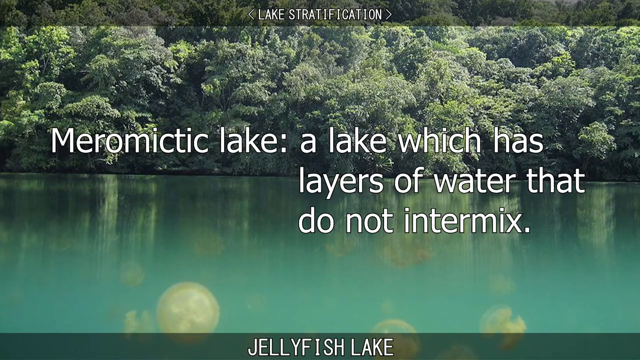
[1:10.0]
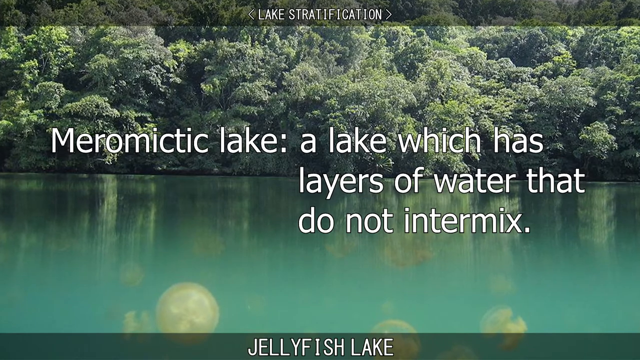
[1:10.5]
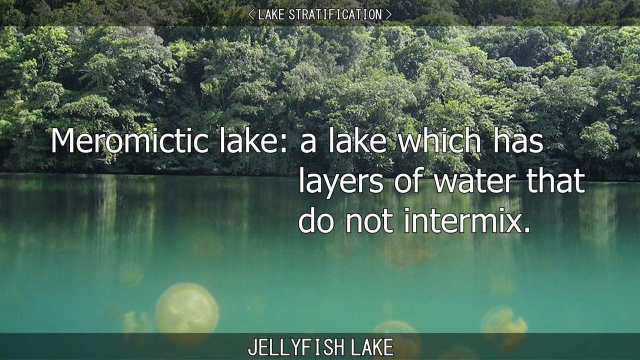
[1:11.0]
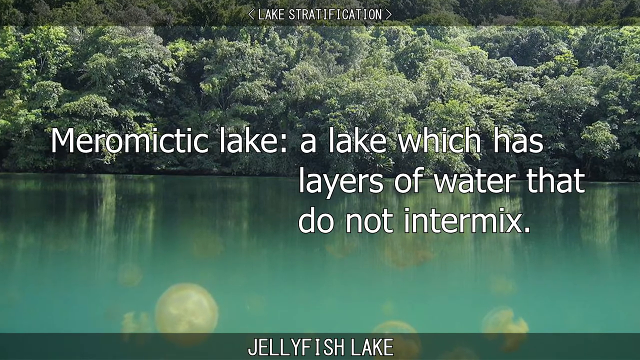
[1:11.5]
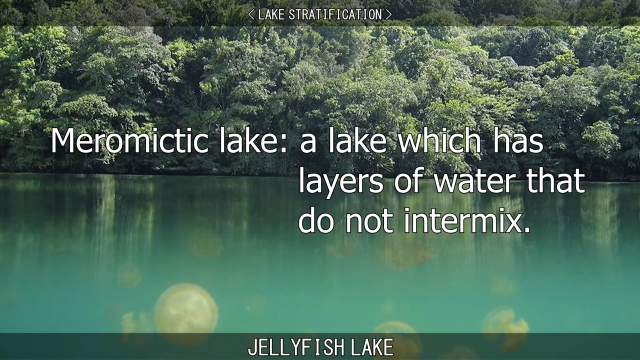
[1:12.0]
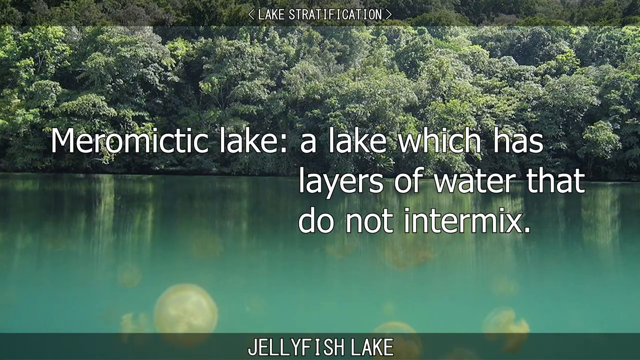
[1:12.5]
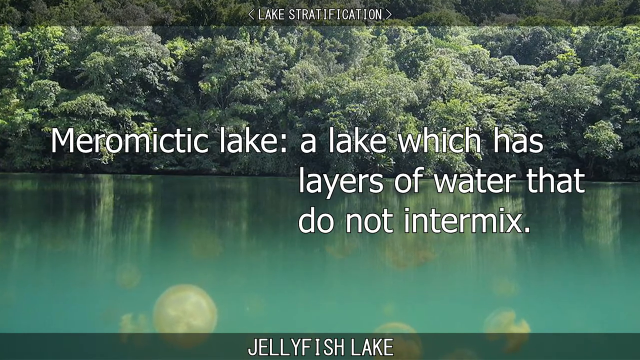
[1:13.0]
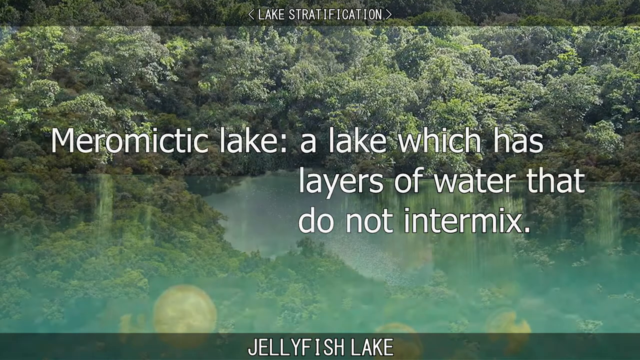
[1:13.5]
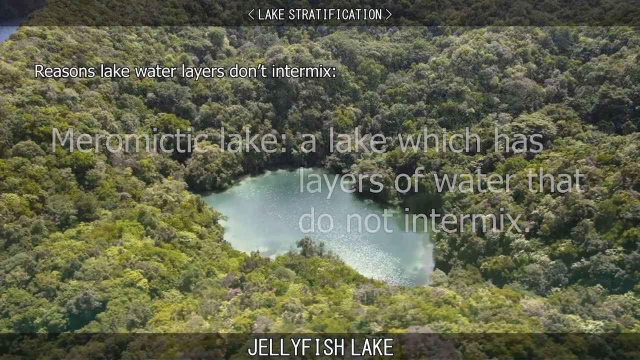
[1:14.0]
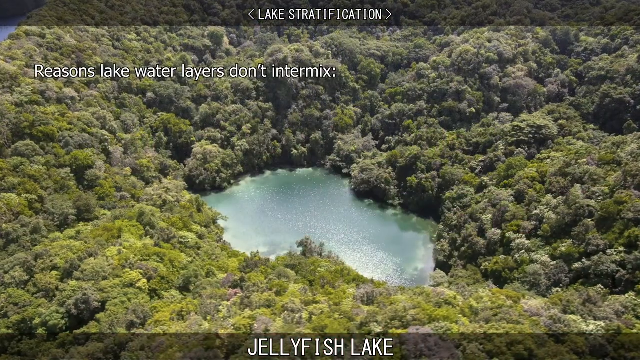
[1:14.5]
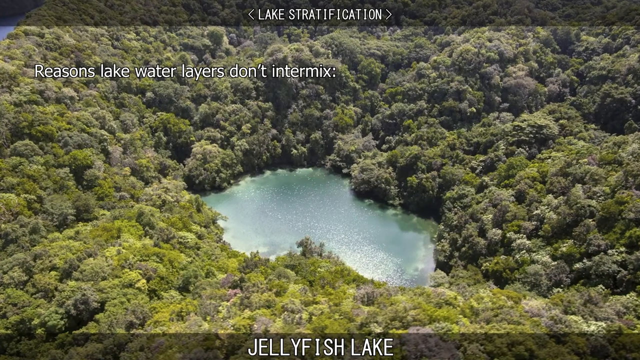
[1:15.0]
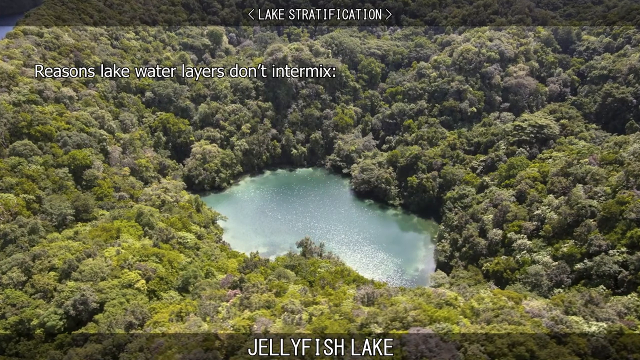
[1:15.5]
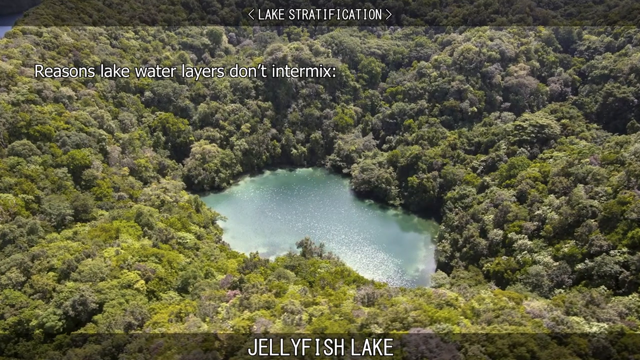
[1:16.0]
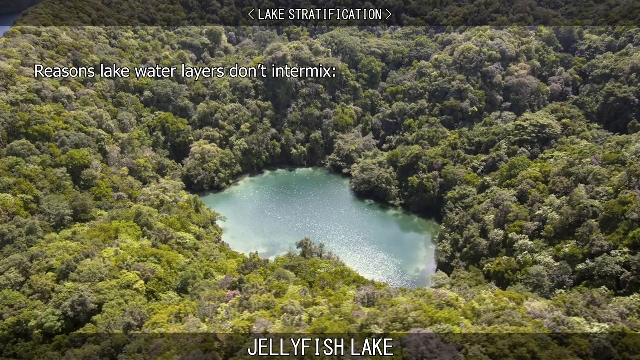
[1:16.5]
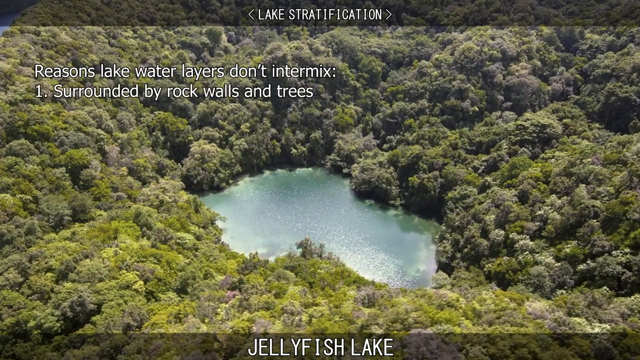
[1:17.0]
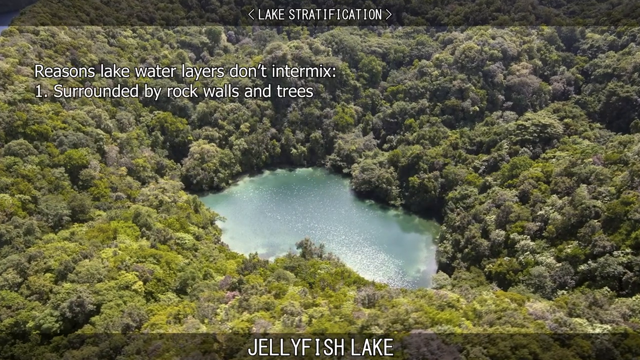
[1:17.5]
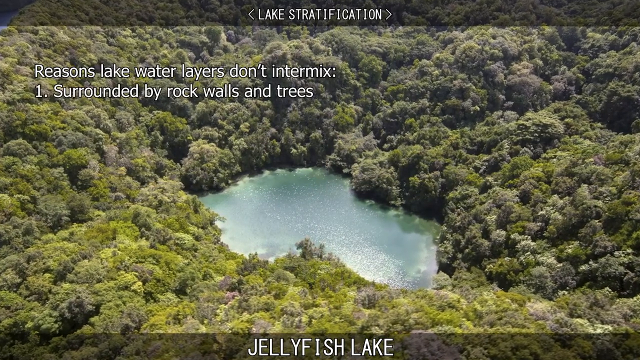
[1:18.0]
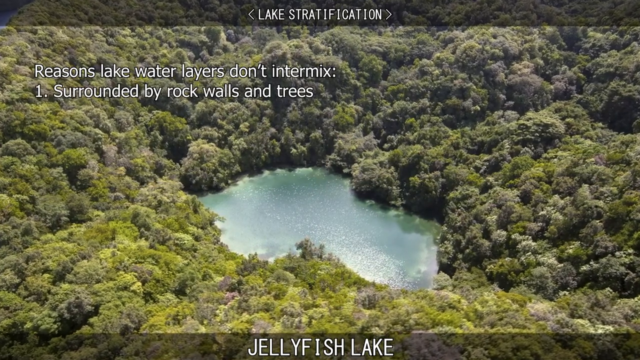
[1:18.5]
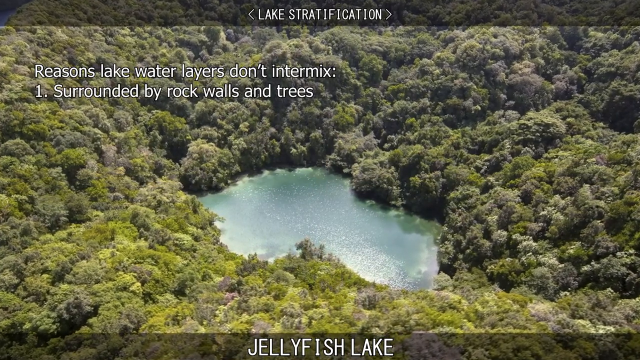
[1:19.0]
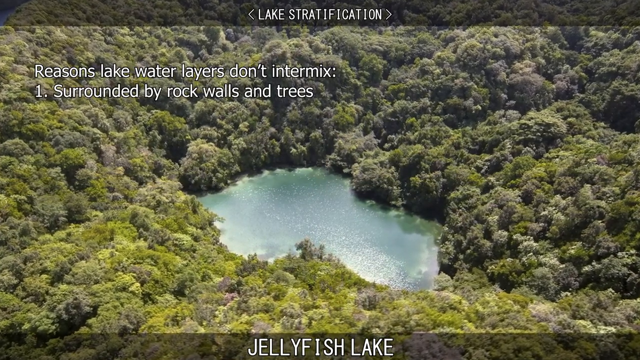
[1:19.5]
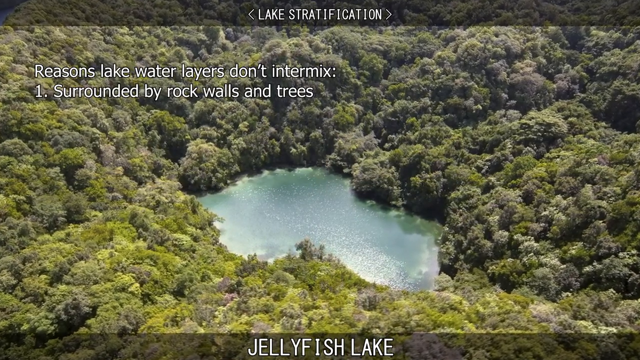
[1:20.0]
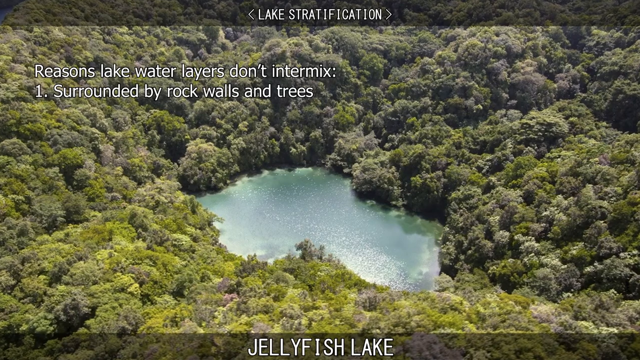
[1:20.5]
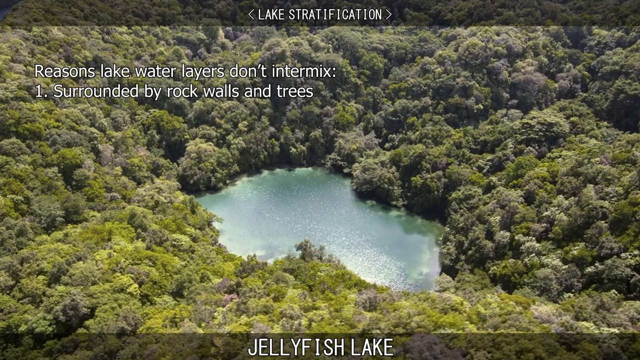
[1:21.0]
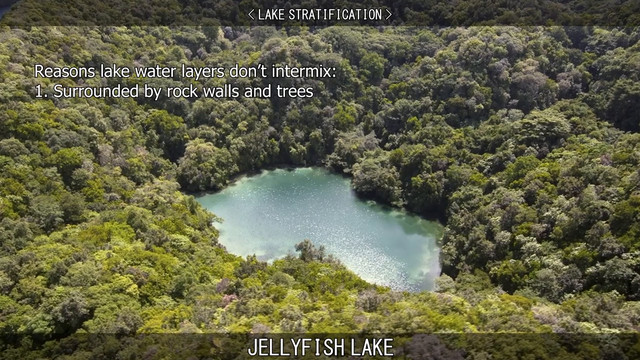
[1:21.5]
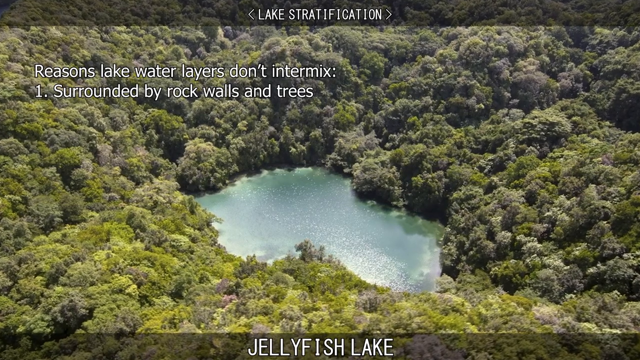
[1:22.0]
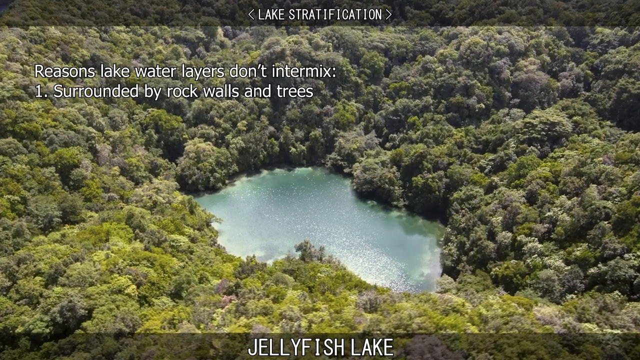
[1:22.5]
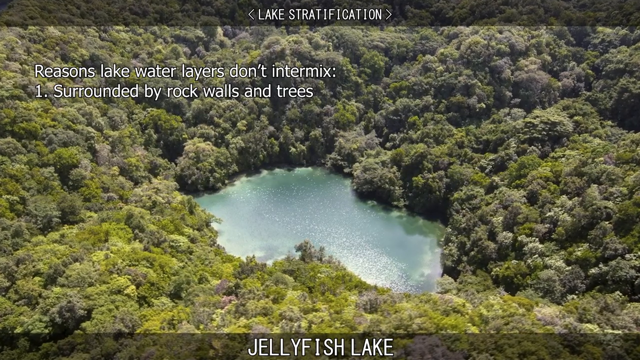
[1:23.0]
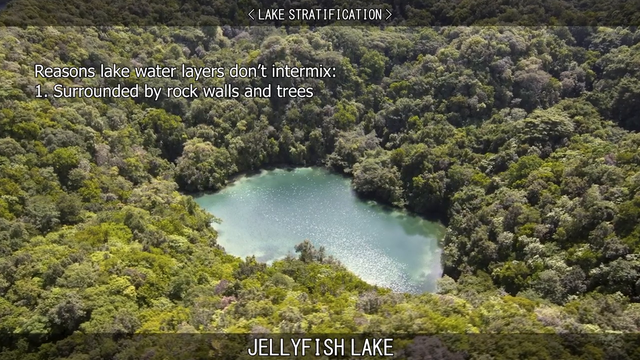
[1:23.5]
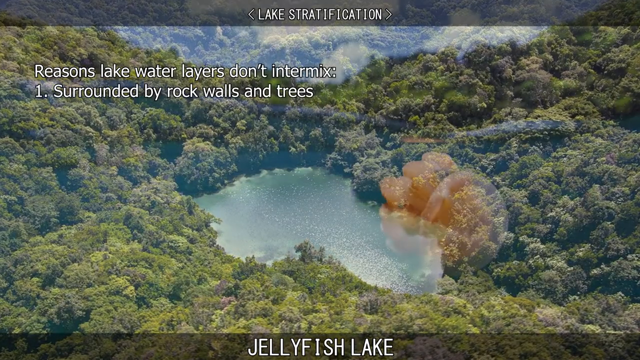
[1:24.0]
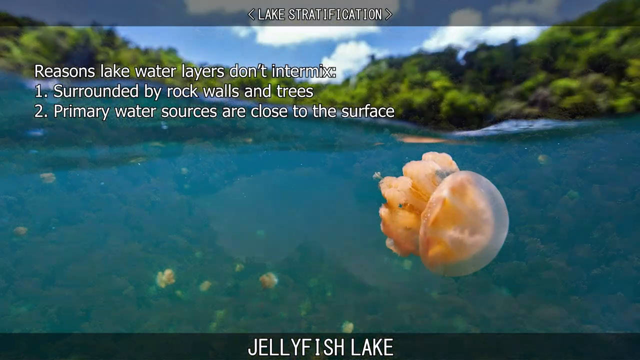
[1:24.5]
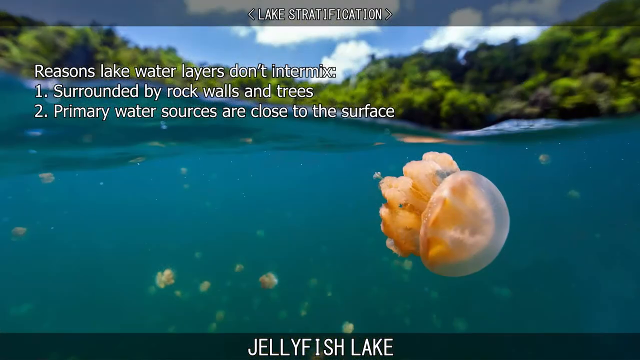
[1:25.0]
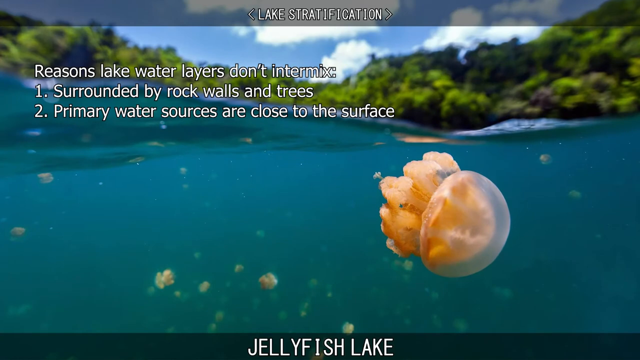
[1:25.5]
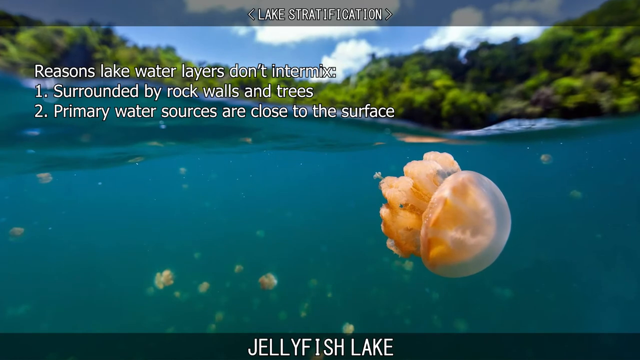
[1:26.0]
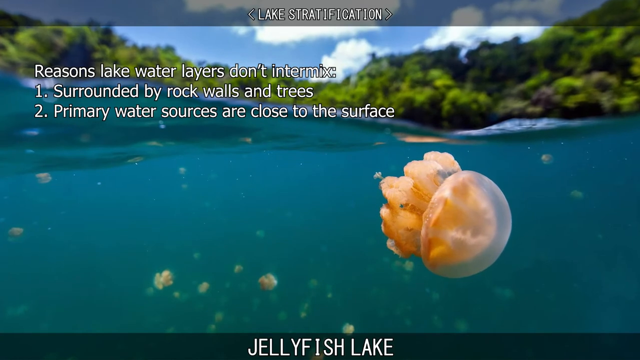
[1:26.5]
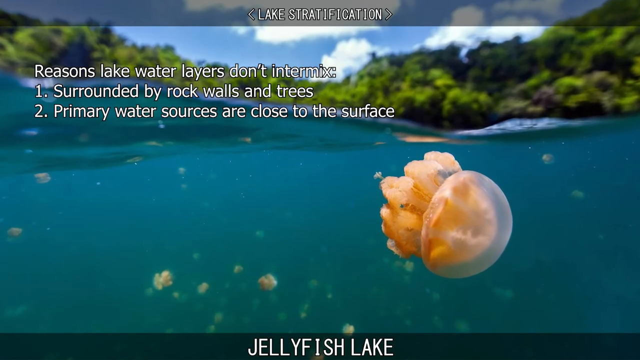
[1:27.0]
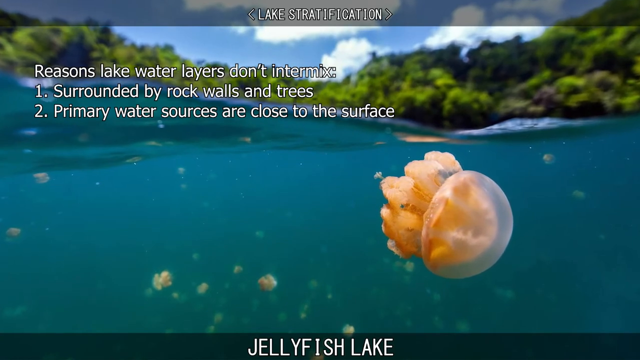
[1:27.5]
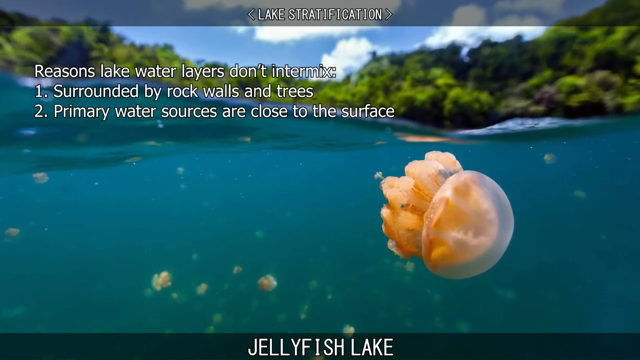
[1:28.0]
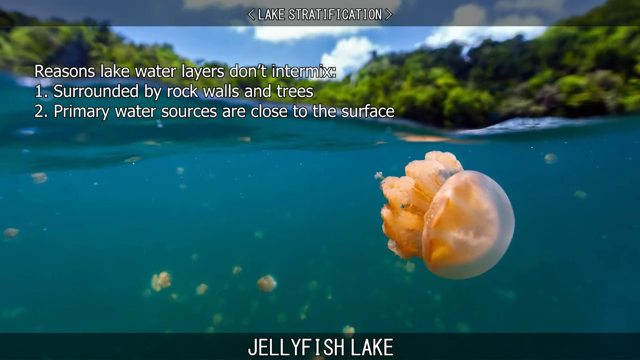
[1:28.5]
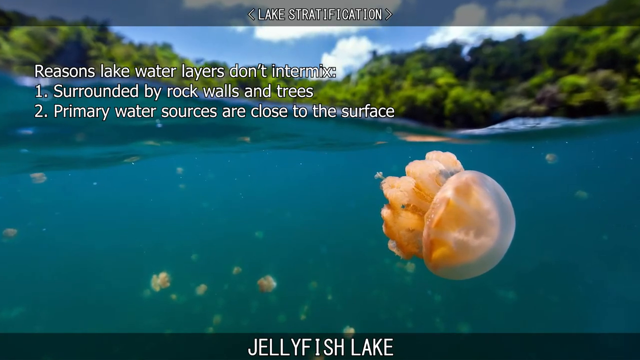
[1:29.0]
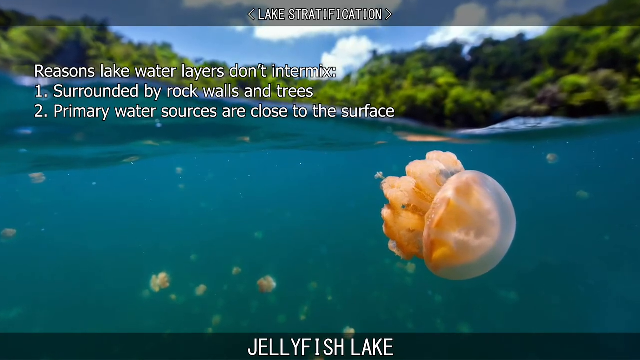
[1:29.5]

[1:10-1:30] The topic turns to meromictic lakes, lakes in which the layers of water do not intermix. Reasons given include that the lake is surrounded by rocks, walls and trees and that its primary water sources are close to the surface. The jellyfish need to stay in the top, oxygenated part of the lake to survive. A lake appears with a bunch of jellyfish on top of it; the water is very clear, and it looks like it is surrounded by trees and rock walls, mostly trees.